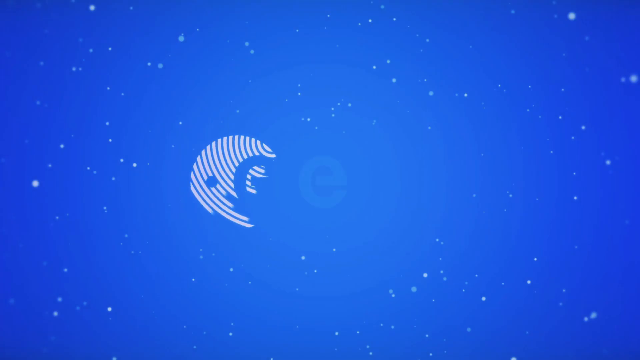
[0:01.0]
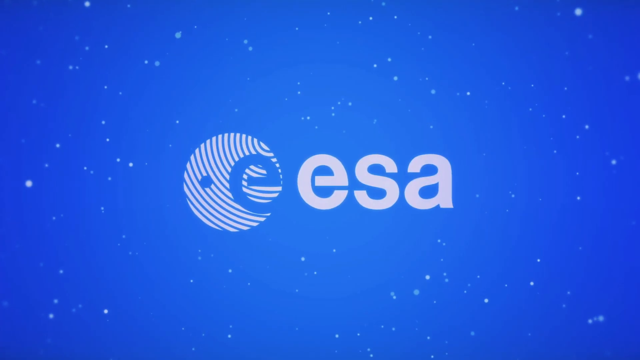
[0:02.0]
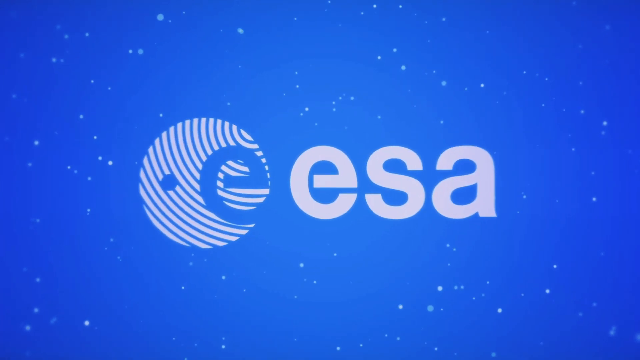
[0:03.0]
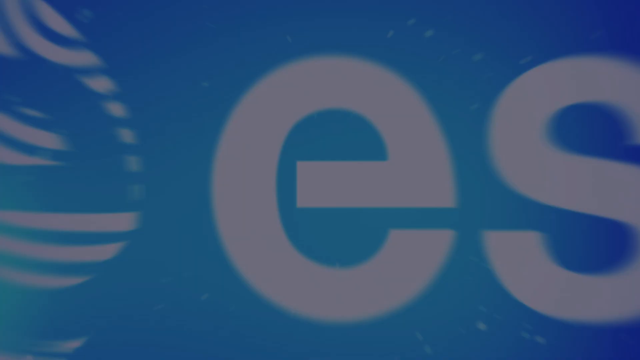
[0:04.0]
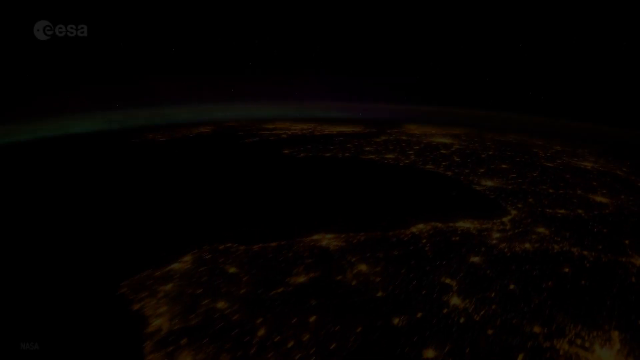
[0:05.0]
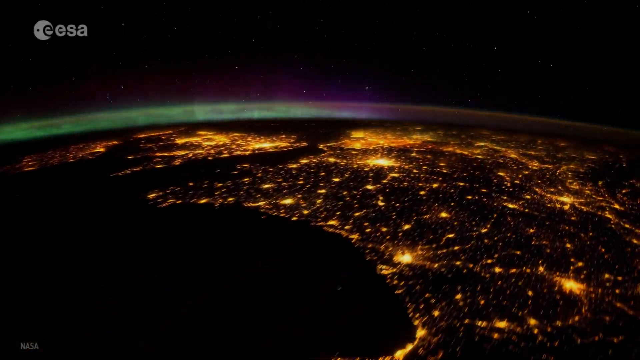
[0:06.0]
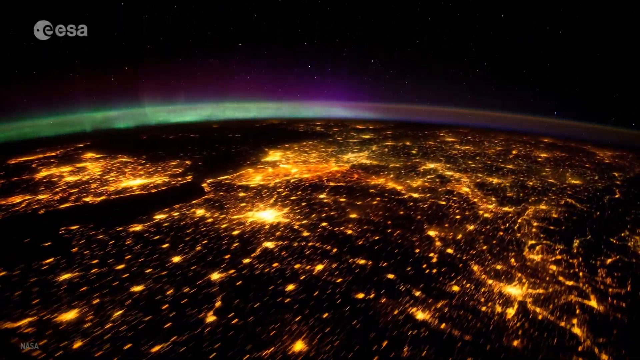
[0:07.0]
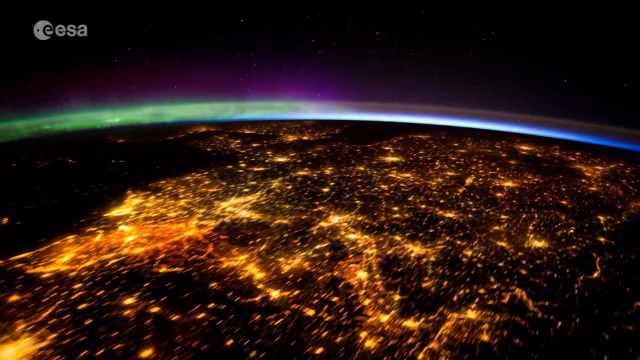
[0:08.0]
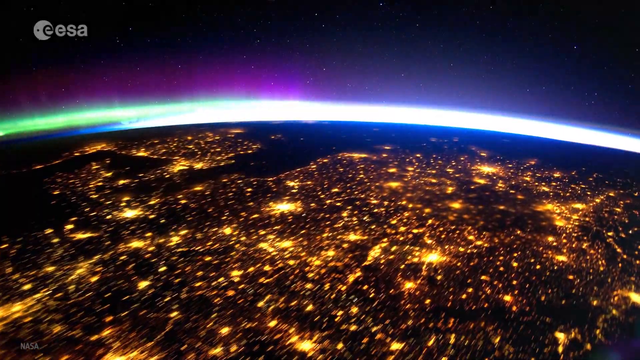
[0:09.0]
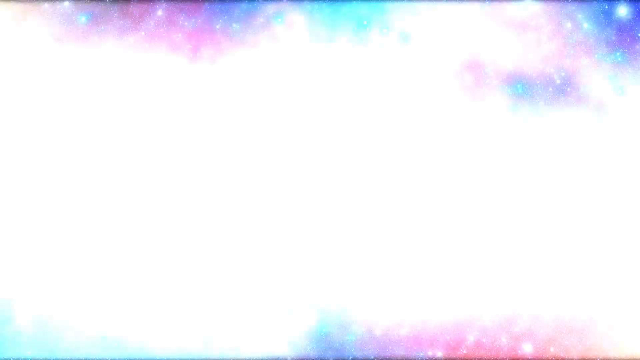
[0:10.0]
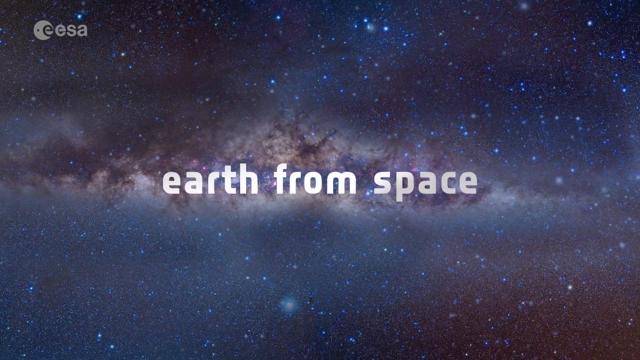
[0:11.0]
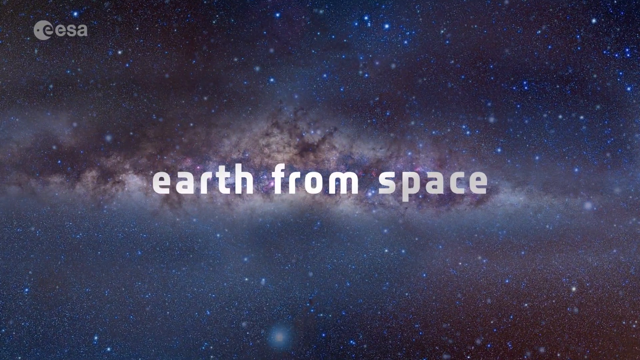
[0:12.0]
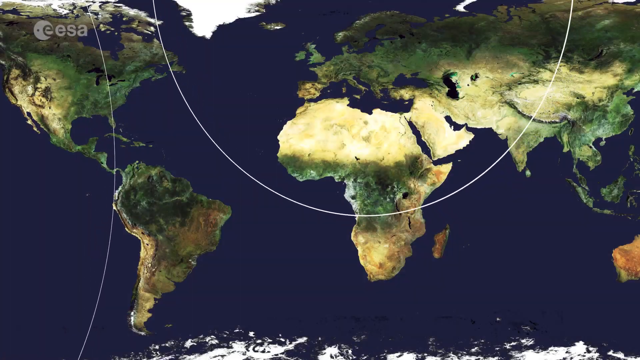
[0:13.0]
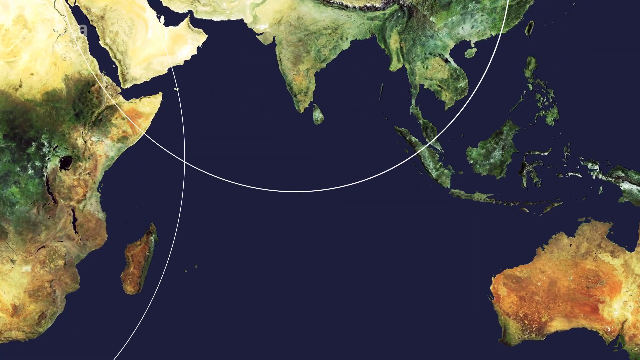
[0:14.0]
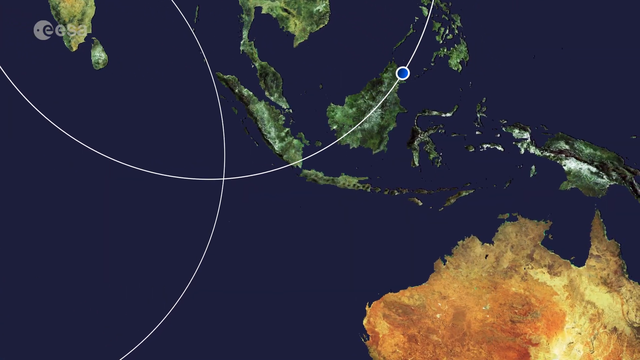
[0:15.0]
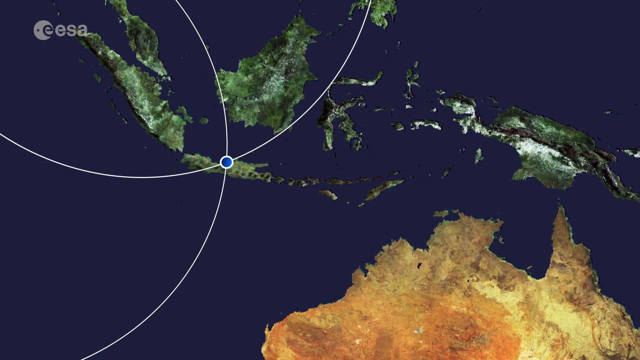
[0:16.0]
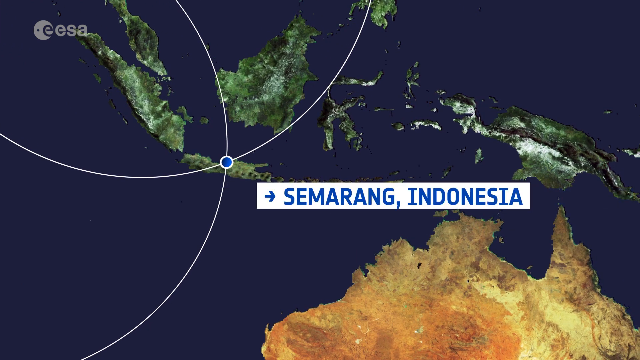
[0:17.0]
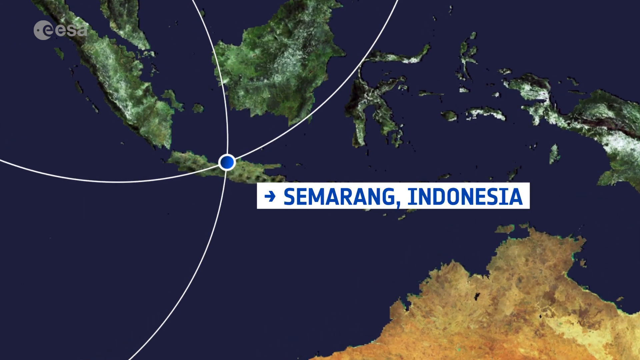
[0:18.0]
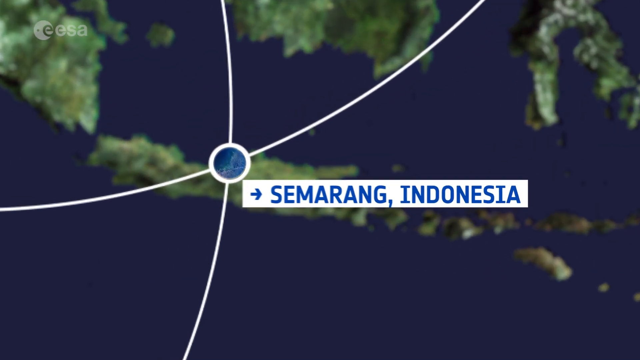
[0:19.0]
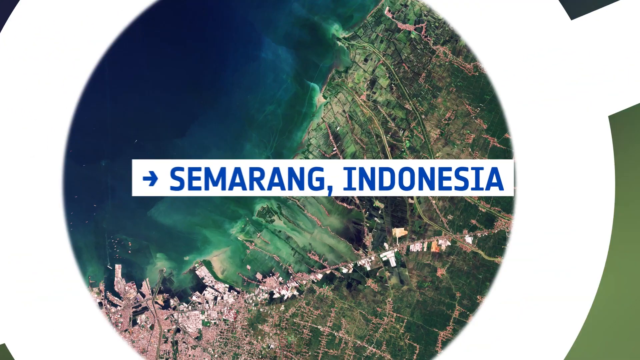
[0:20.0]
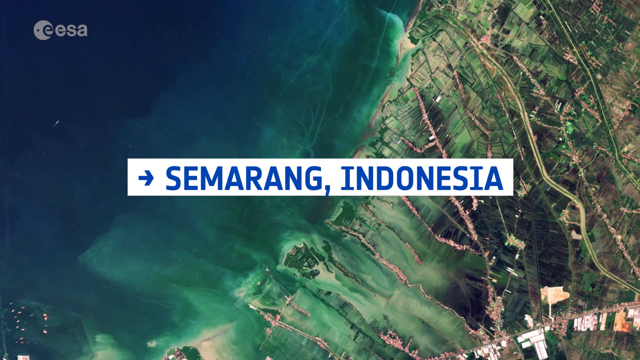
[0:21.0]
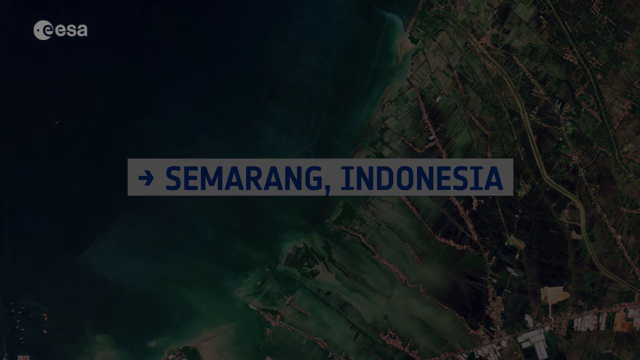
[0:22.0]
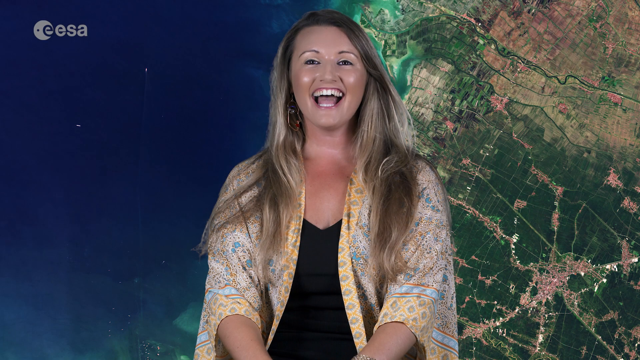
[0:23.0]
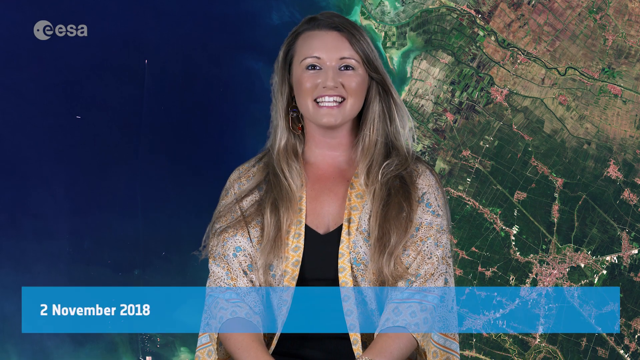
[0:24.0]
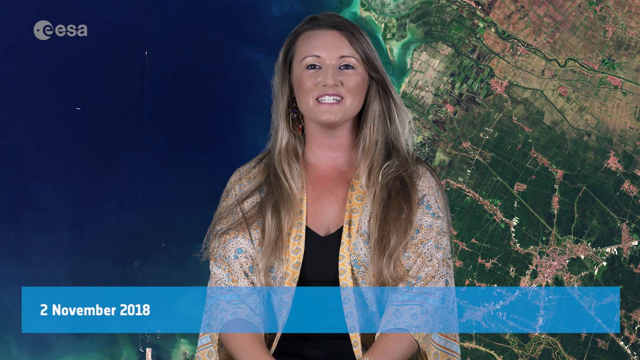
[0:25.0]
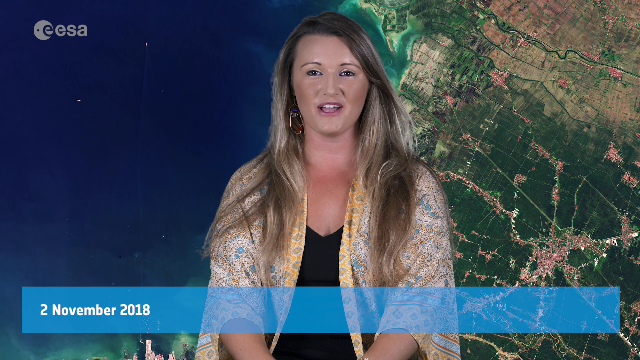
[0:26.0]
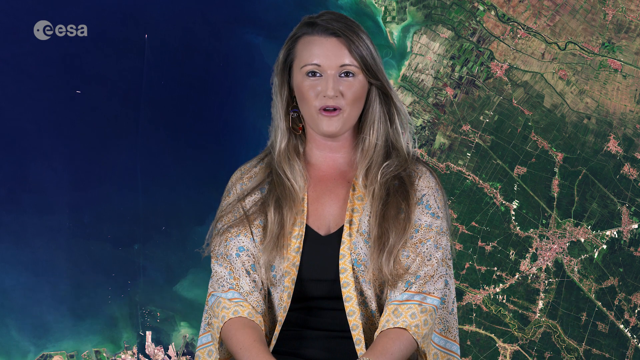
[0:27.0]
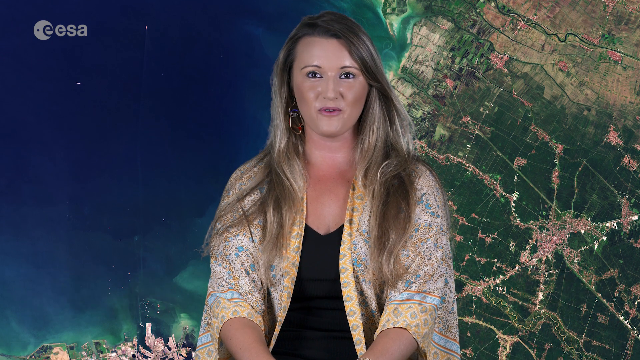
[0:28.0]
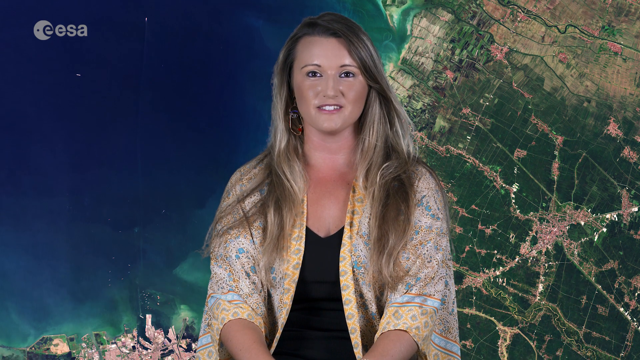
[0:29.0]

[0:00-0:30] A black screen turns blue, and the text "EESA" appears with some stars. A view of the universe follows, with a very bright gold light that moves, then a bright light and the text "earth from space". A map of the world appears, and the view zooms in to Semarang, Indonesia. A woman appears with the text "2 November 2018". She is a white woman with long blonde hair, wearing a colorful robe with a black bodysuit underneath and some large earrings. She talks, moving her hands in front of her, and has a very pleasant look on her face.